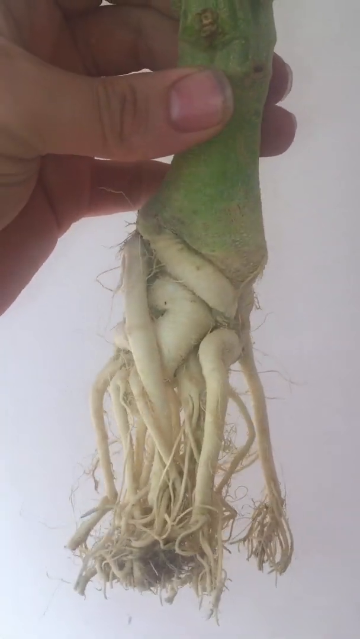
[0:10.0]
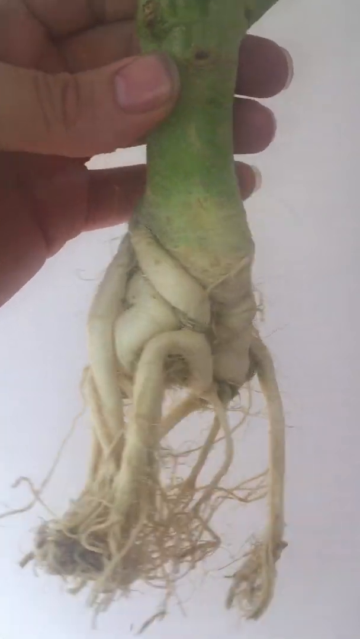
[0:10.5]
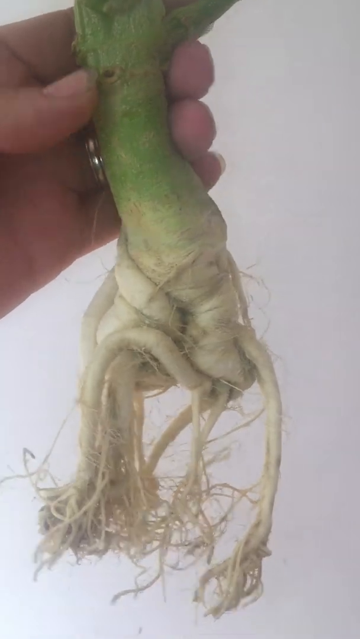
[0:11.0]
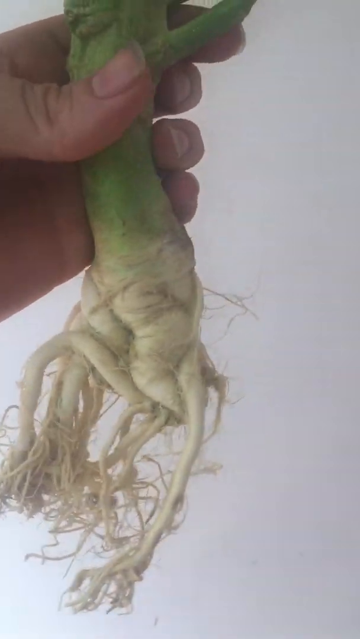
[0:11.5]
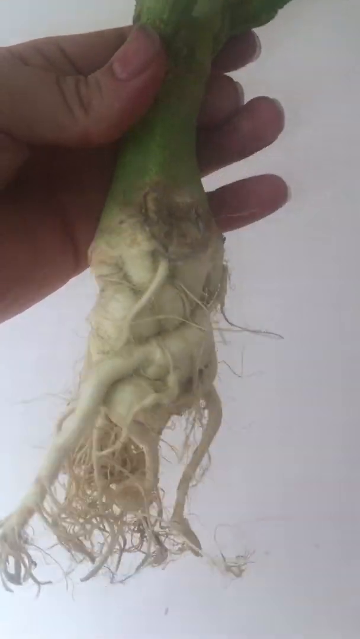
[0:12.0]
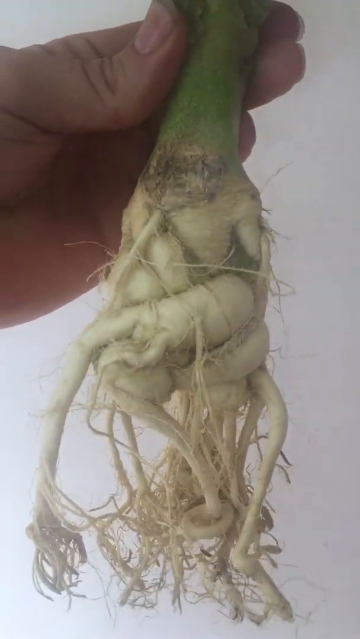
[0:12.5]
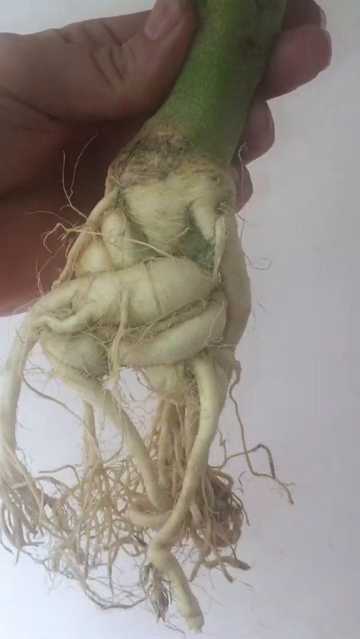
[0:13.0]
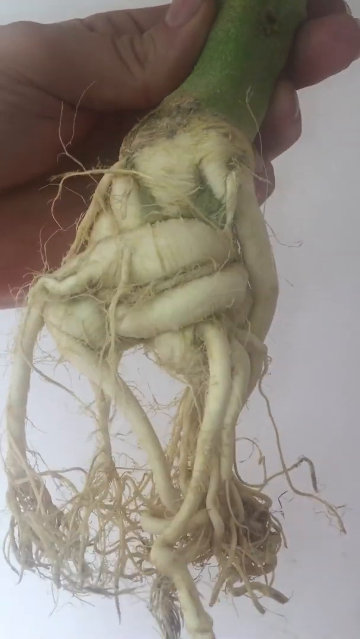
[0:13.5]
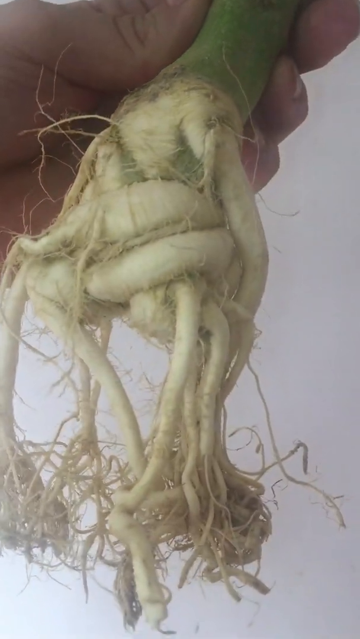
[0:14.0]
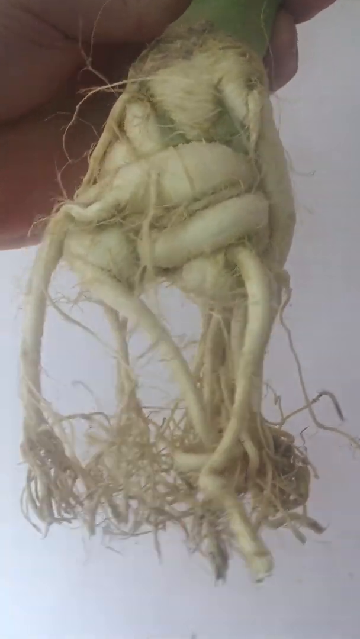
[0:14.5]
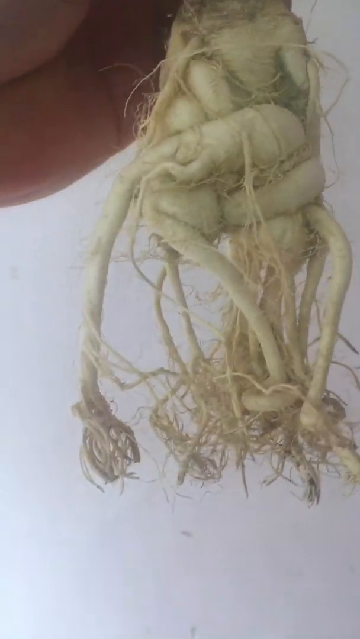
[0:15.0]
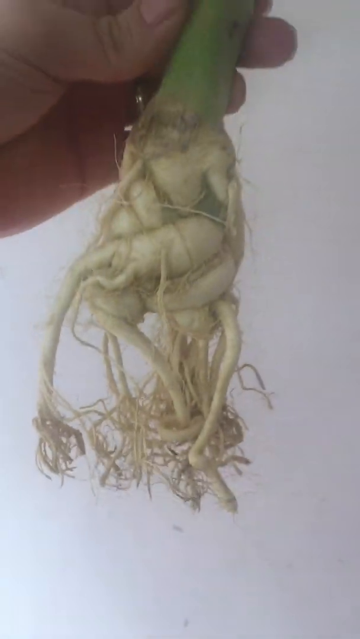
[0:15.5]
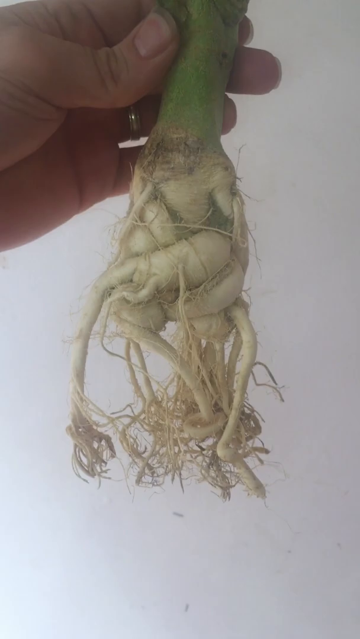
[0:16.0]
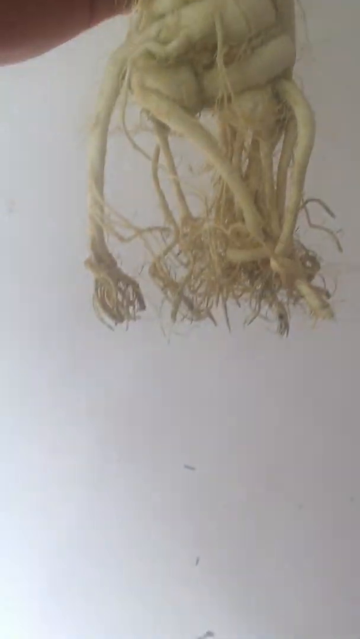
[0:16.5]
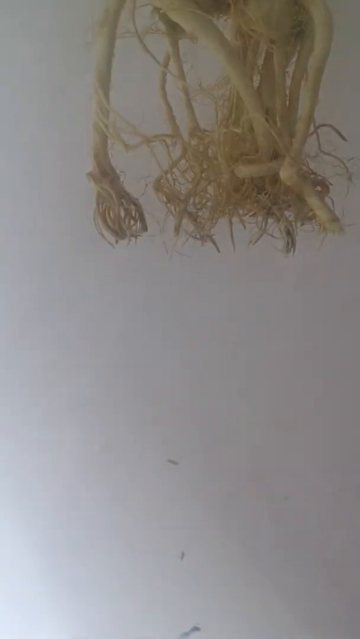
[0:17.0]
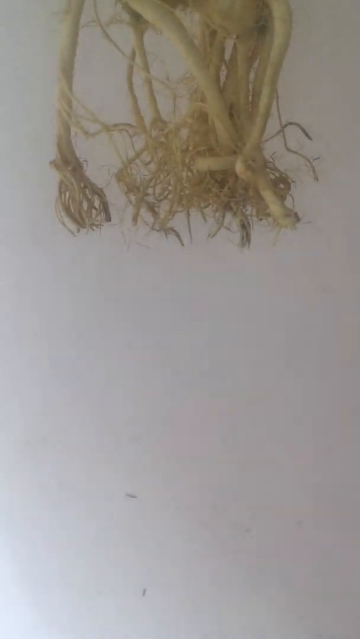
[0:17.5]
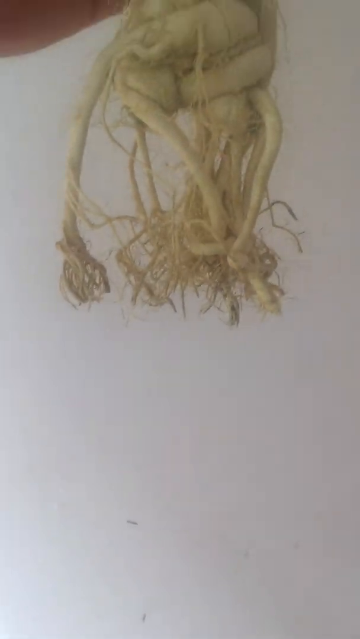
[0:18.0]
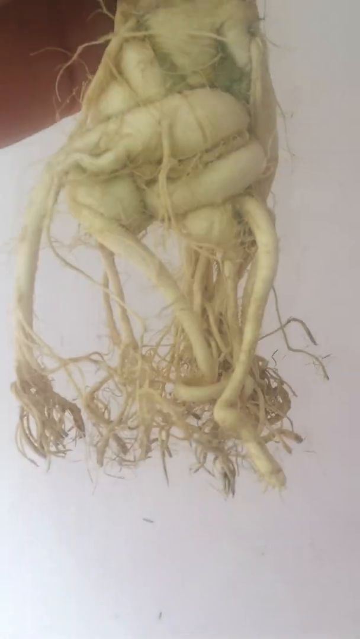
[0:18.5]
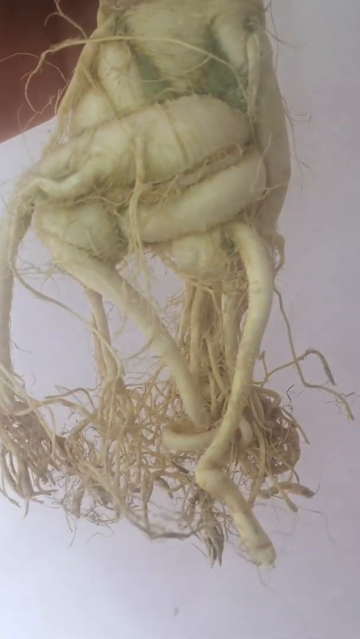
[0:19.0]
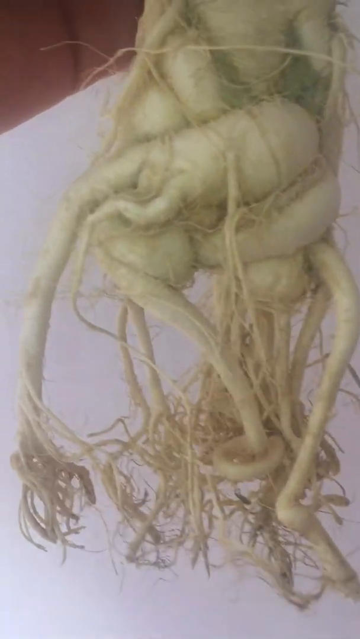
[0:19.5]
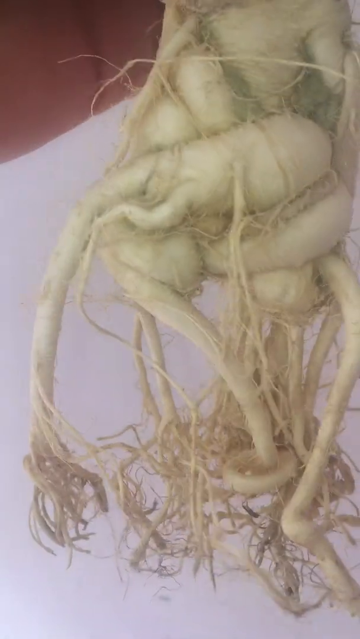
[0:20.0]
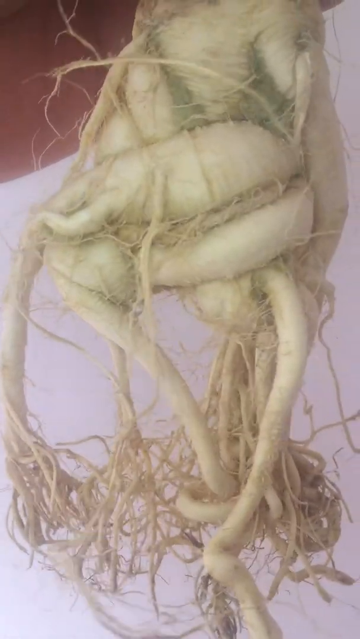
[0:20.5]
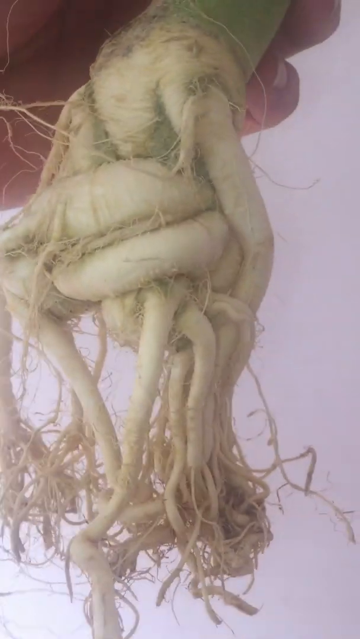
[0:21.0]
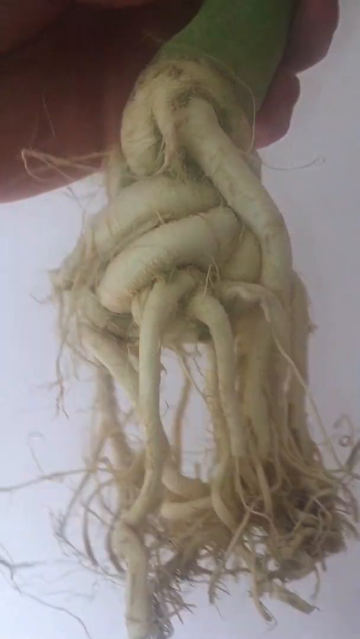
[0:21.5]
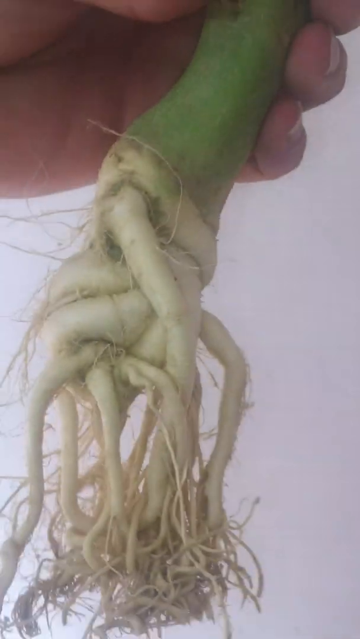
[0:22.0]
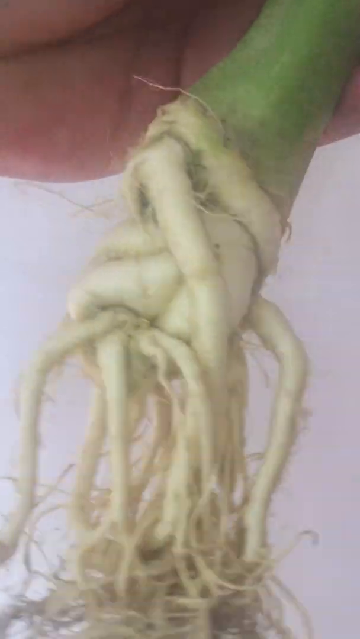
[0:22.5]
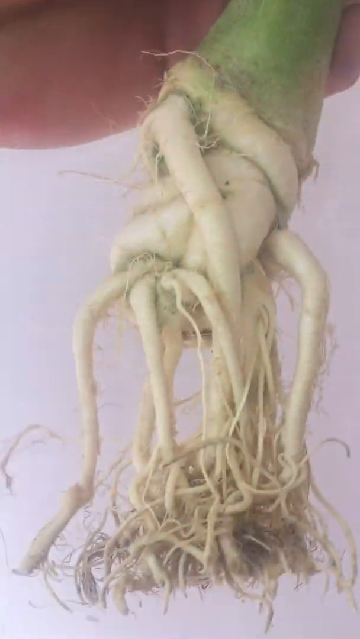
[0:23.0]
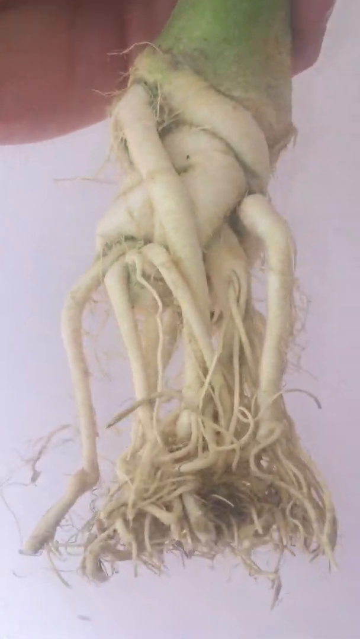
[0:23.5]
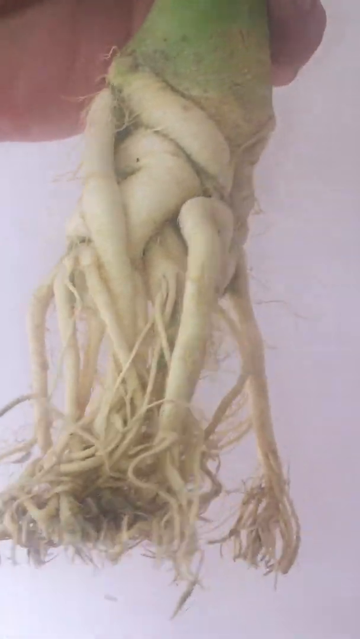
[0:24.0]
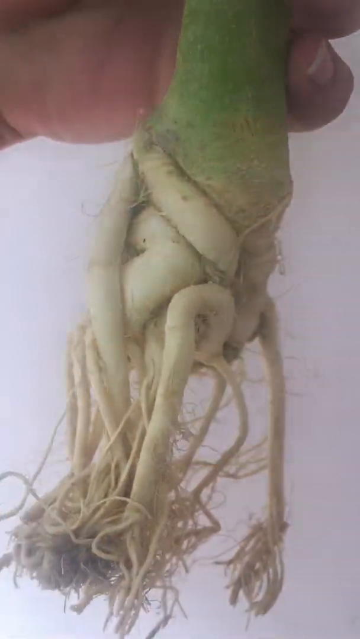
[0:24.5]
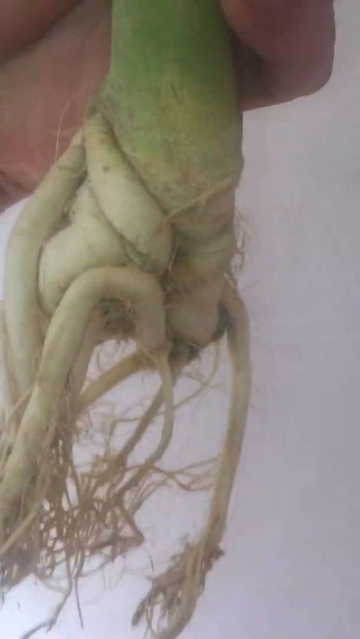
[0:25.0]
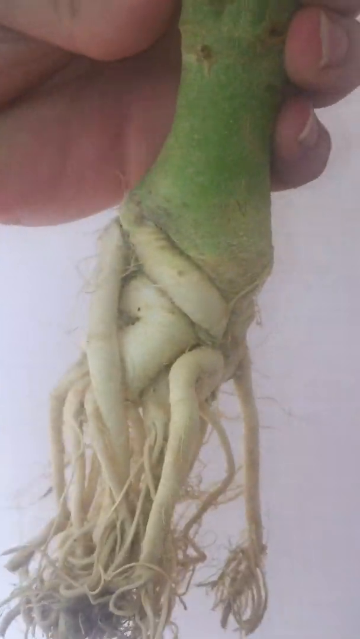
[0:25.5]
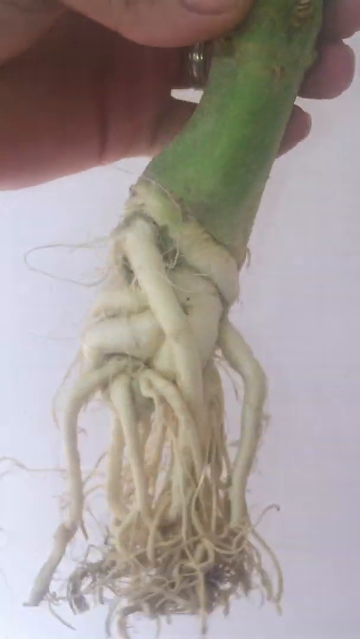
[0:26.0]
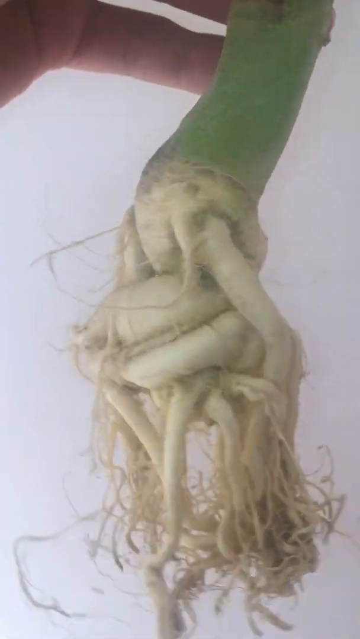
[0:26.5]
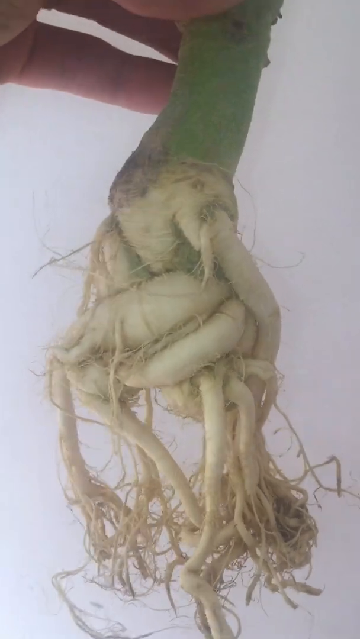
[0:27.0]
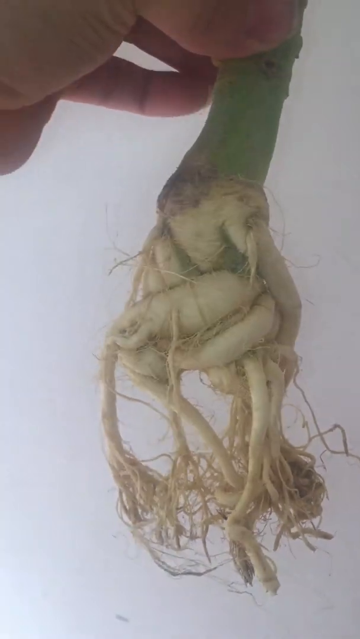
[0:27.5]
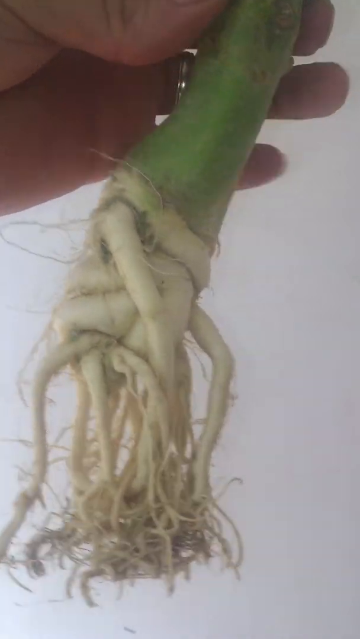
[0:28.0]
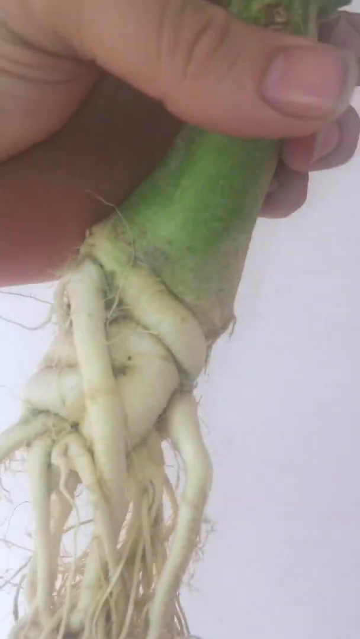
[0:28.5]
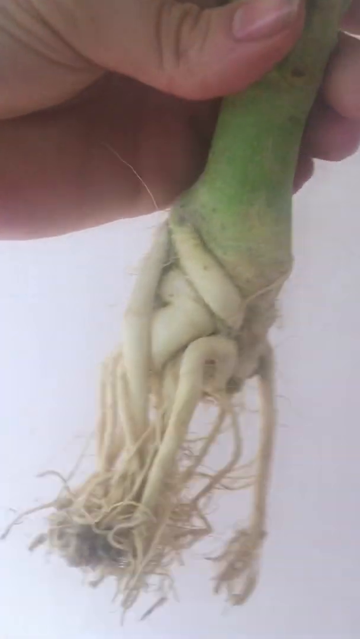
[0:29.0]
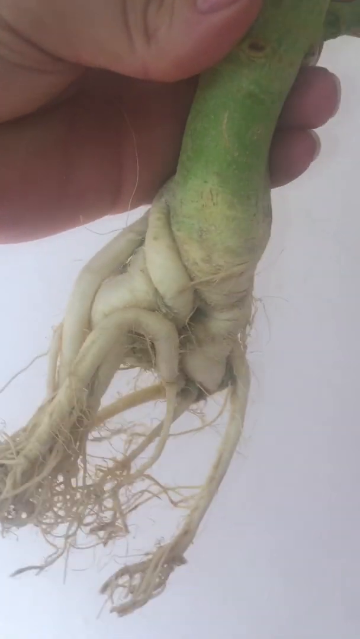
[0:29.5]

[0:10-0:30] The person zooms in on the roots as he twists the plant. The plant is green, with some white roots, and as the person twists it the camera zooms in on the roots. The background is white. The picture is a little blurry and the camera quality is very poor, so what is behind can hardly be seen. The person holding the plant is not visible; only the hand and the nails can be seen.